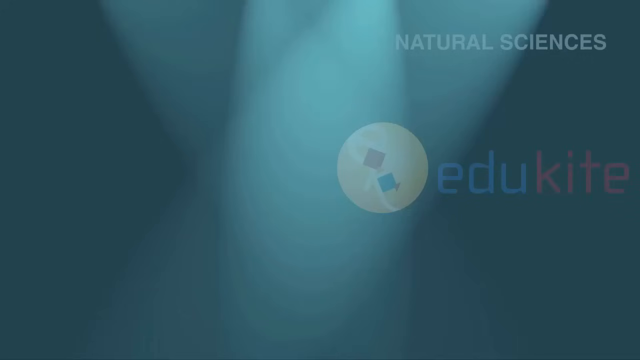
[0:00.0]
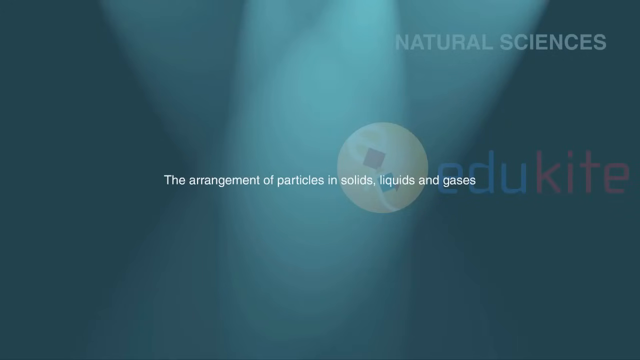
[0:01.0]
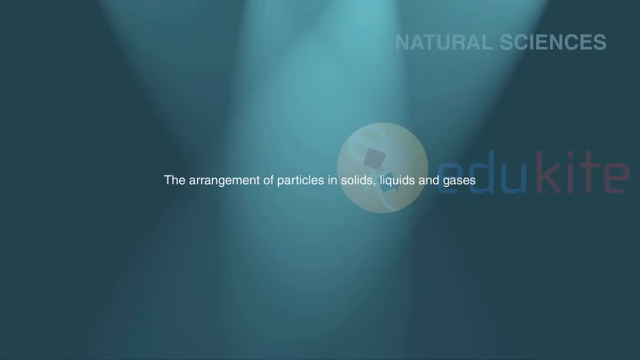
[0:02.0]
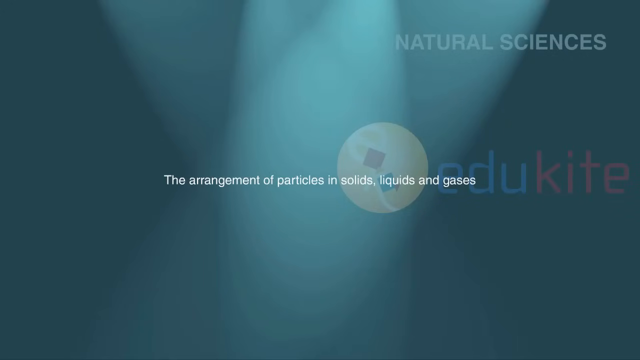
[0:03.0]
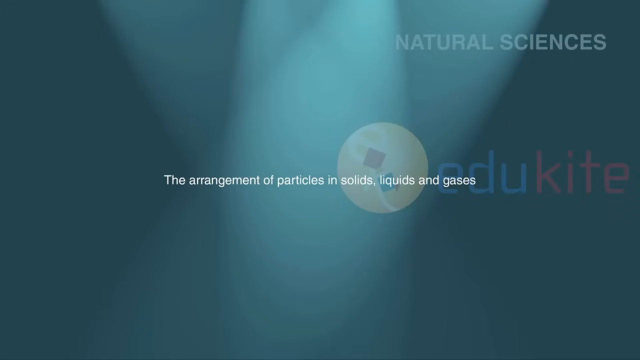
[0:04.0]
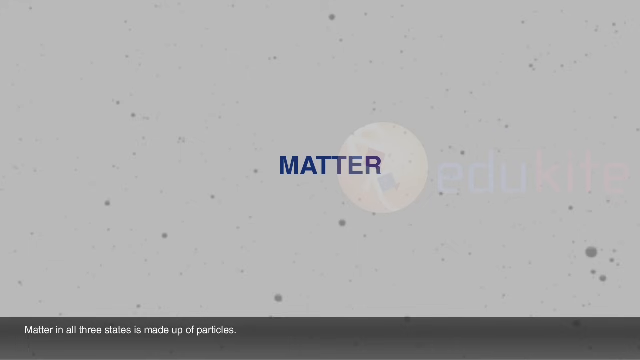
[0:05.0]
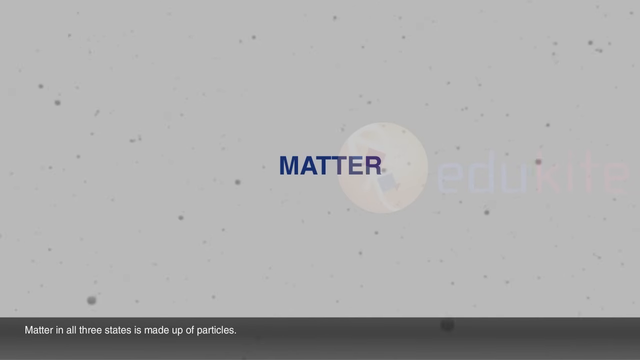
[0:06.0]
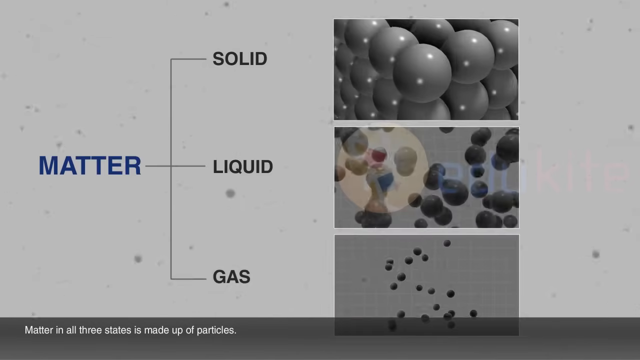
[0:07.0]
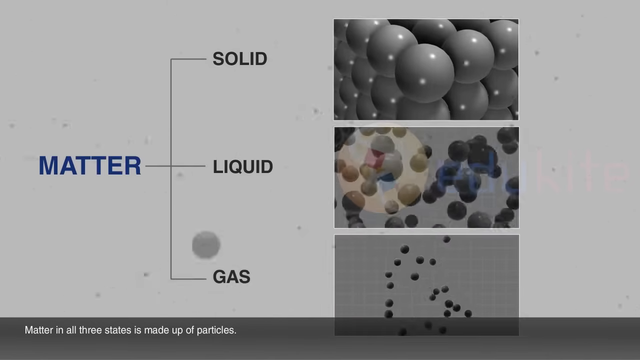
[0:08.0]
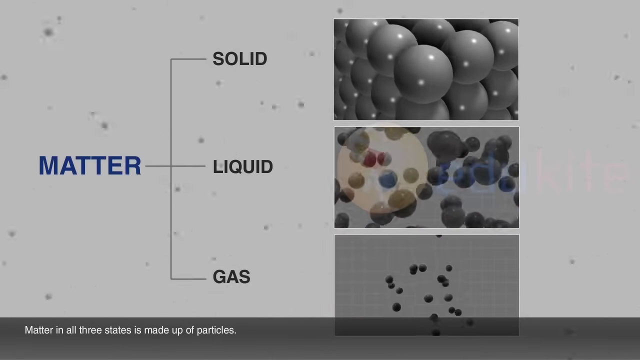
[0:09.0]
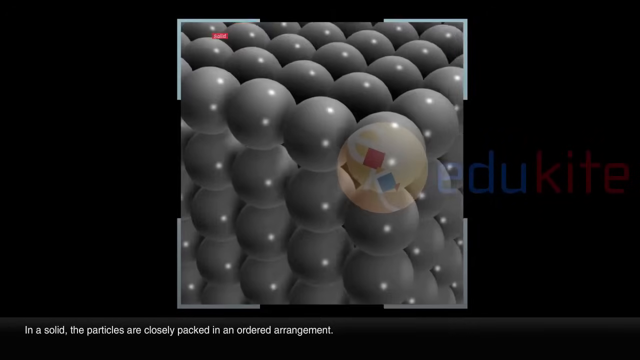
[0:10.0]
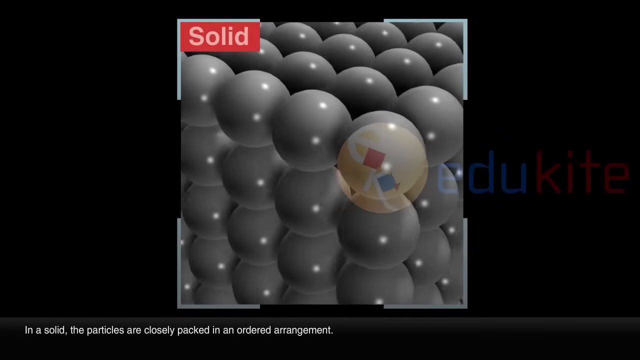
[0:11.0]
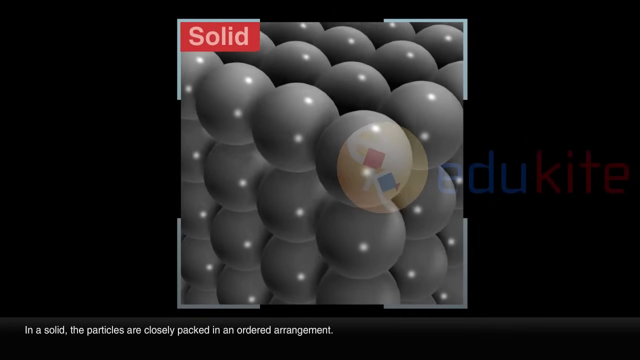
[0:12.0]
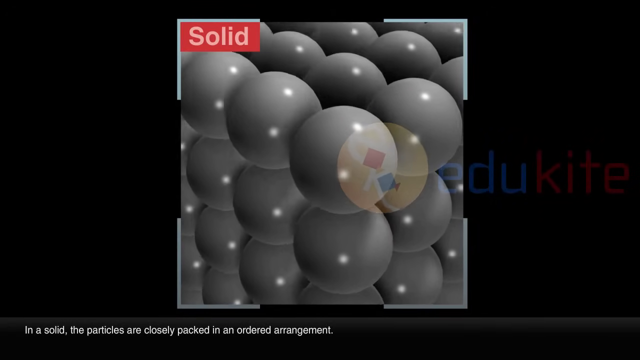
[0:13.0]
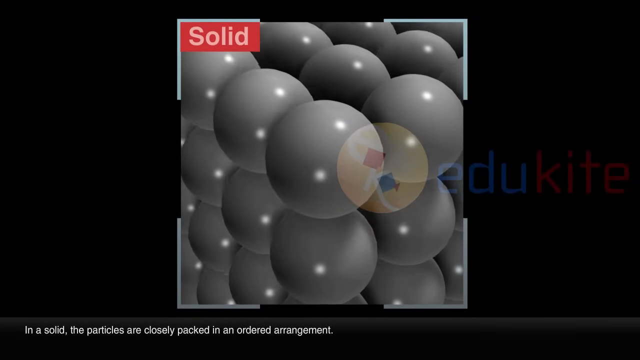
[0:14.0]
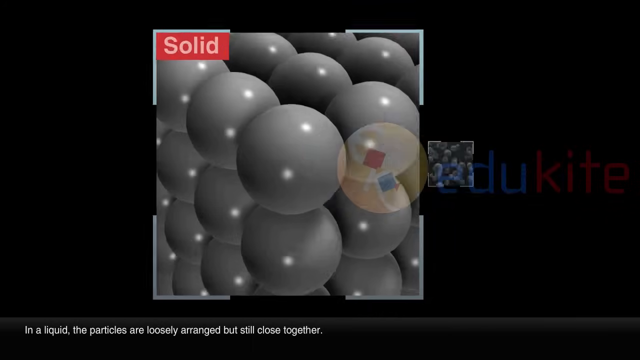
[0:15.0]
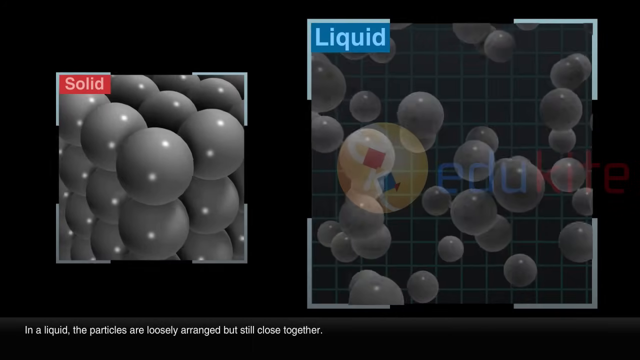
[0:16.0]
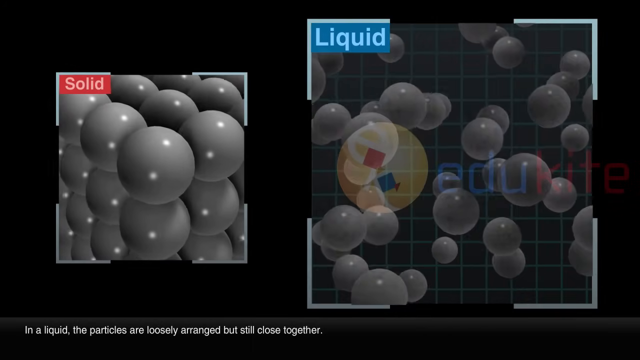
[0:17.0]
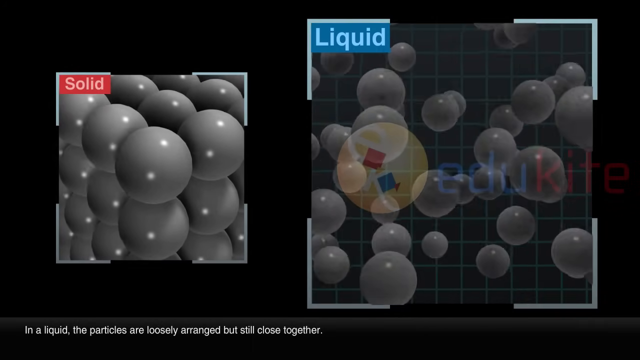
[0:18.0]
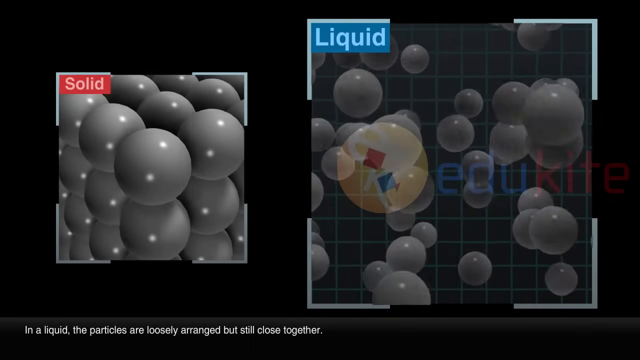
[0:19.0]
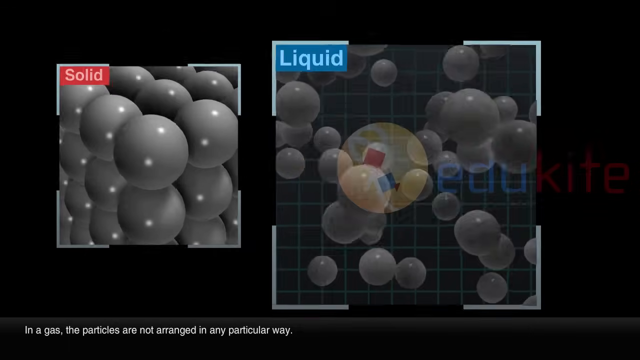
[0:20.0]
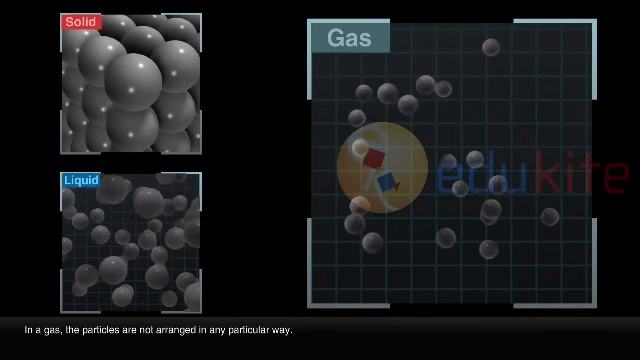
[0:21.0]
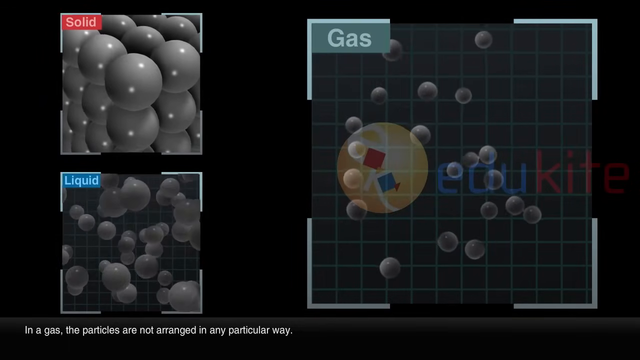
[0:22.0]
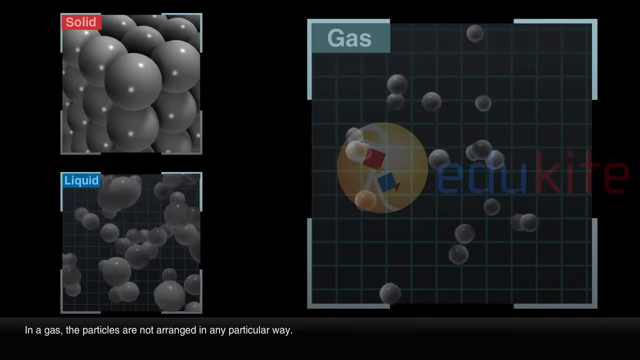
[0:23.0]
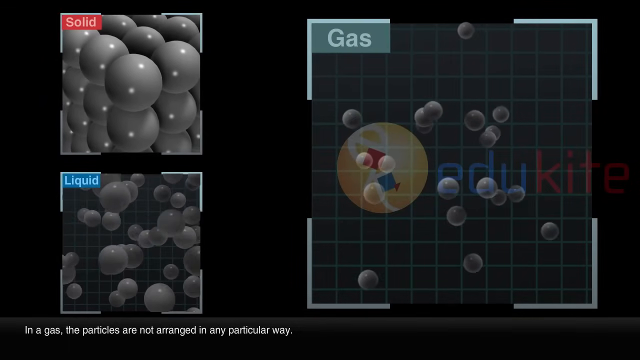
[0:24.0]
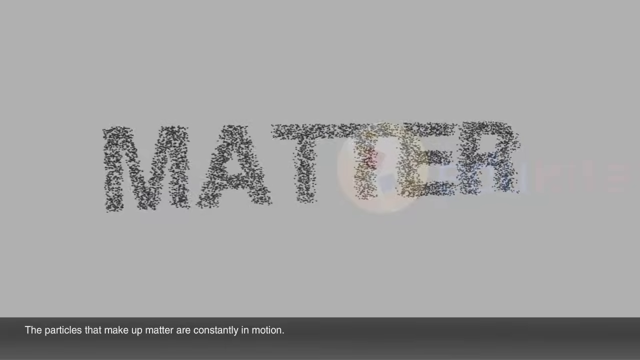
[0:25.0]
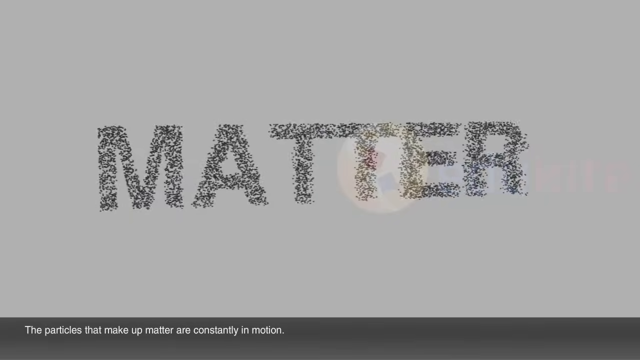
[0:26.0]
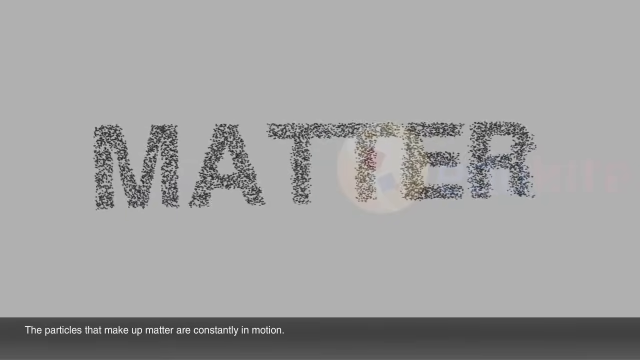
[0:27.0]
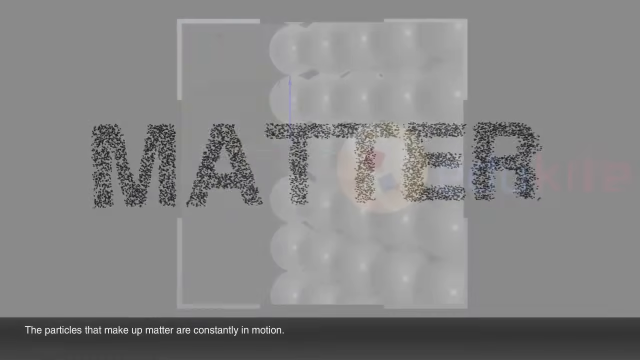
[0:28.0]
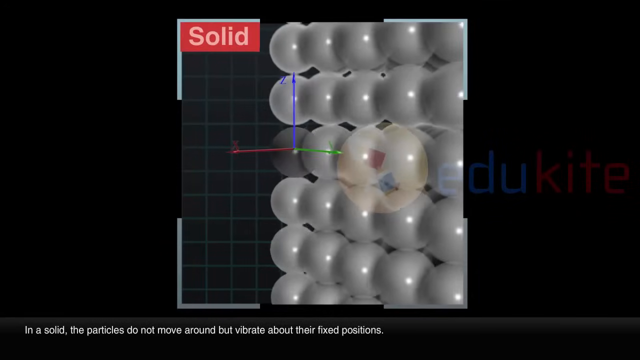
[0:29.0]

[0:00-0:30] At the start the video appears to have a light blue background. At the top right, white text reads "natural sciences," and on the right side blue and red text reads "edukite." White text then slides in from the right toward the middle, reading "the arrangement of particles in solids liquids and gases," and then slides off to the left. The video transitions to a scene that looks like a white background with what looks like many particles, black dots, floating toward the viewer. At the bottom, a transparent gray rectangle or banner holds white text reading "matter in all three states is made up of particles." In the middle, blue text reads "matter"; it slides to the left and three lines come out of it, labeled "solid" at the top, "liquid" in the middle and "gas" at the bottom. To the right of each label is a black-and-white picture: next to solid, what looks like a lattice of 3D spheres in a tightly packed structure, all next to each other; for liquid, what looks like spheres floating around randomly; and for gas, what looks like random floating spheres, far fewer of them and very open. White text at the bottom reads "in a solid the particles are closely packed in an ordered arrangement." The background then turns black and a zoomed-up view of the spheres in a solid appears: many spheres tightly packed in almost a cube structure, apparently vibrating in place, with a red rectangle at the top left reading "solid." The solid picture slides left and becomes smaller, and another square appears on the right with "liquid" in white text in a blue rectangle at its top left; text at the bottom reads "in a liquid the particles are loosely arranged but still close together." In this square many spheres slowly float around, bumping into each other and bouncing around. The liquid square moves to the bottom left and the solid square to the top left, leaving two smaller squares, and a bigger square appears on the right with "gas" at the top left in a green rectangle. White text at the bottom reads "in a gas the particles are not arranged in any particular order." There appear to be fewer spheres, very small, freely bouncing around. The video then transitions to what looks like a white background with the word "matter" made of many little black dots or spheres, rotating slowly to the right in a clockwise fashion, while white text at the bottom reads "the particles that make up matter are constantly in motion." Next the solid picture returns in the middle, with a blue, red and green x-y-z axis on one of the spheres, and white text at the bottom reads "in a solid the particles do not move around but vibrate about their fixed positions." The particles appear to be just vibrating.